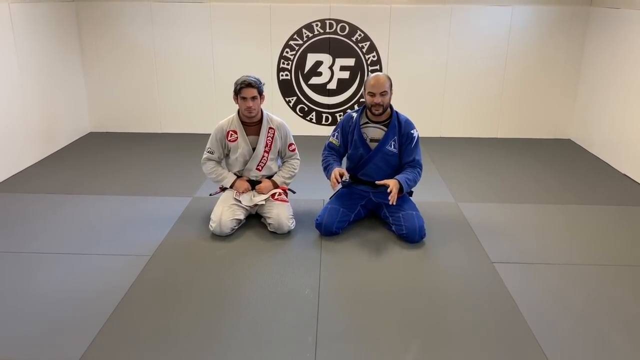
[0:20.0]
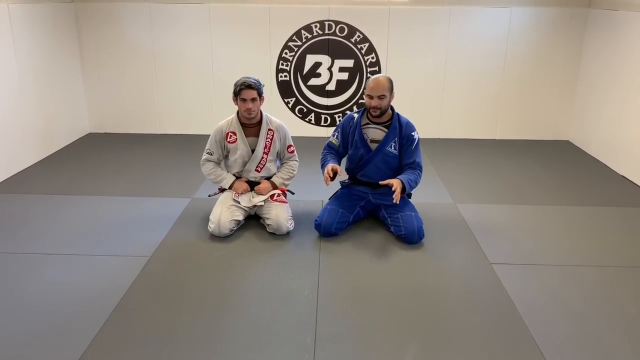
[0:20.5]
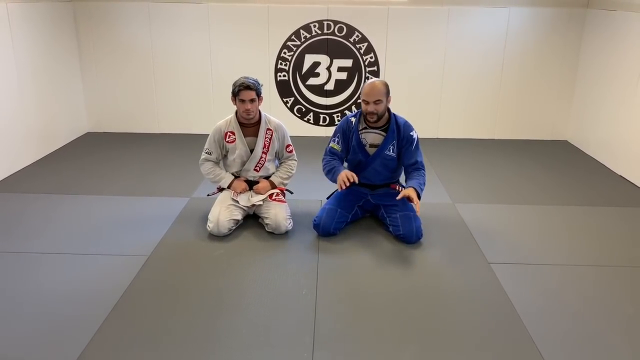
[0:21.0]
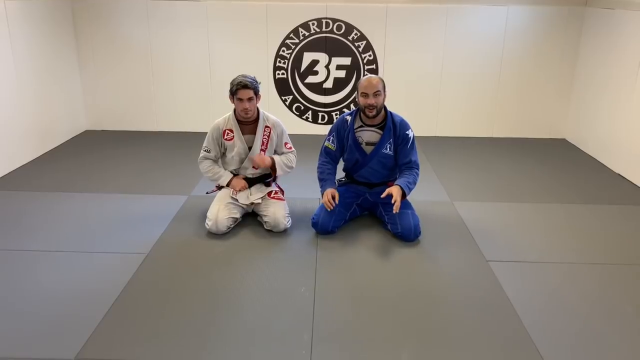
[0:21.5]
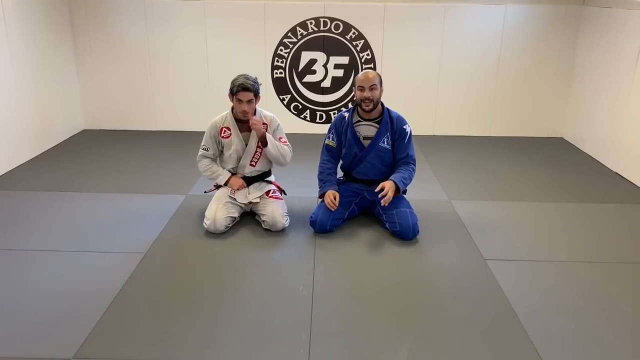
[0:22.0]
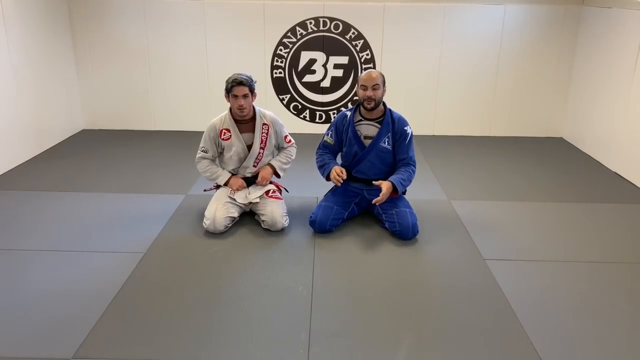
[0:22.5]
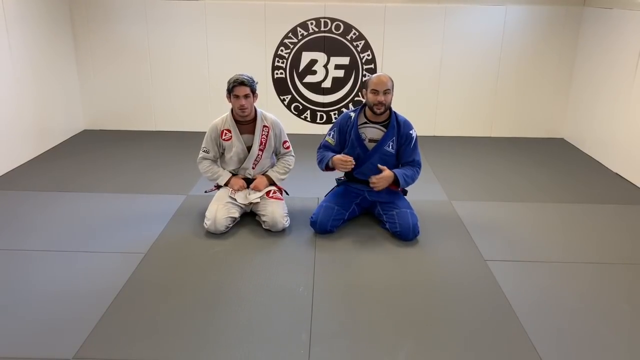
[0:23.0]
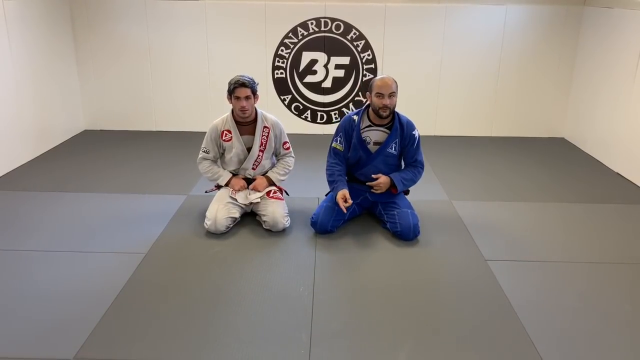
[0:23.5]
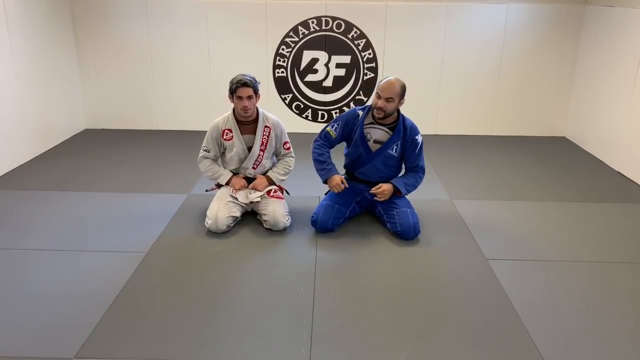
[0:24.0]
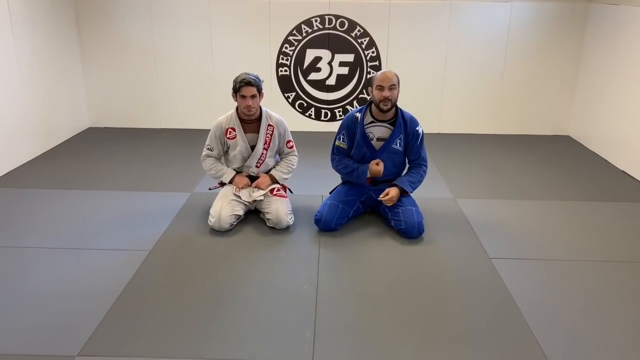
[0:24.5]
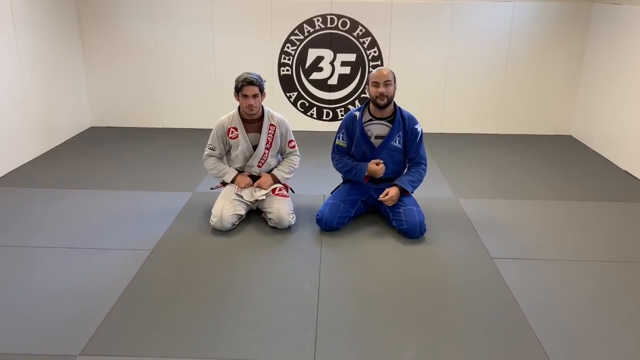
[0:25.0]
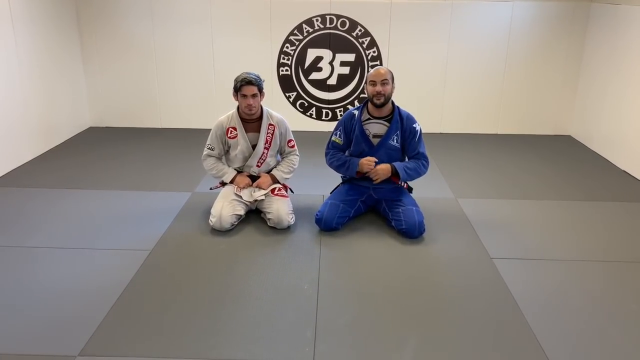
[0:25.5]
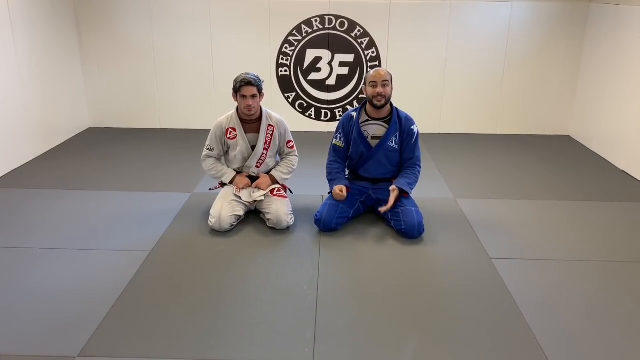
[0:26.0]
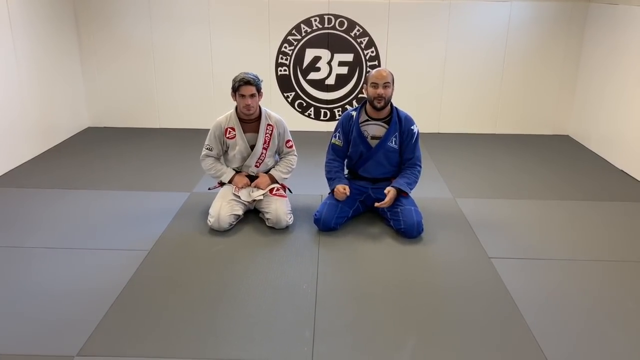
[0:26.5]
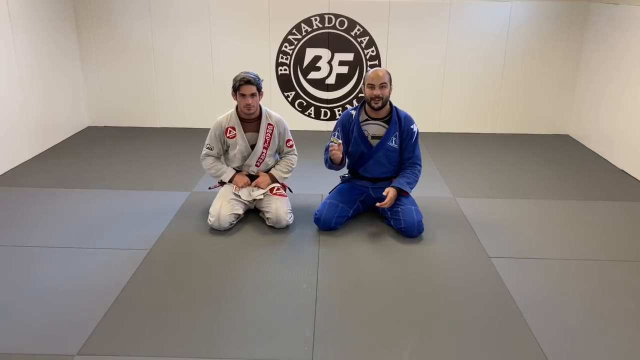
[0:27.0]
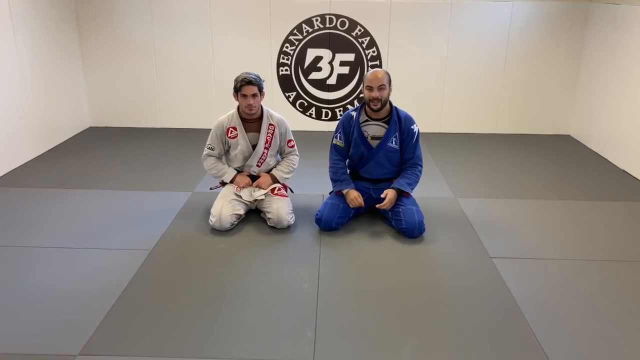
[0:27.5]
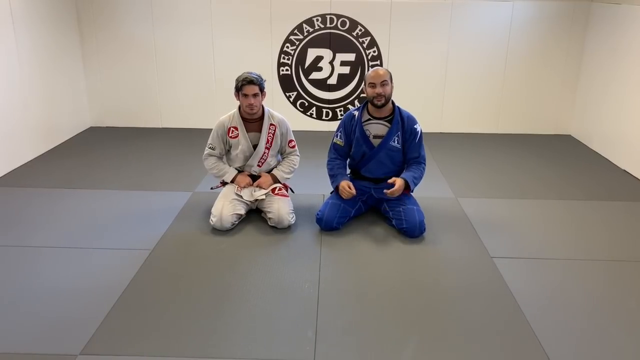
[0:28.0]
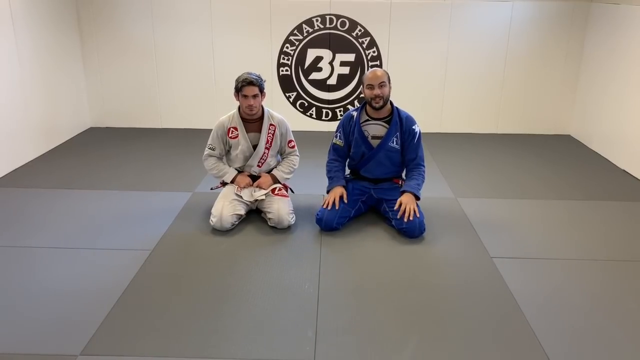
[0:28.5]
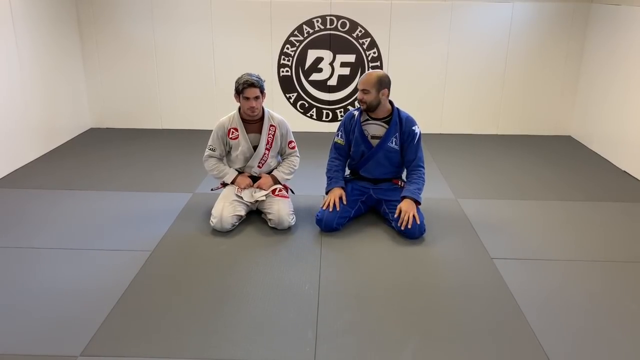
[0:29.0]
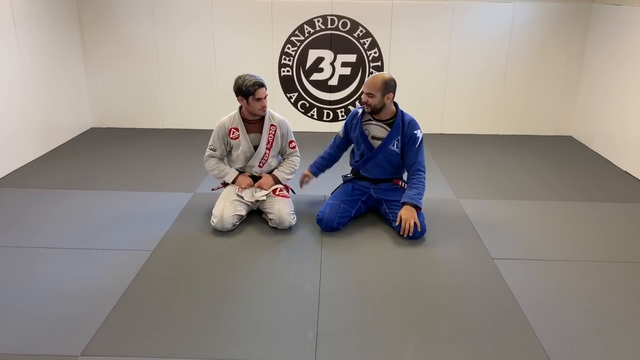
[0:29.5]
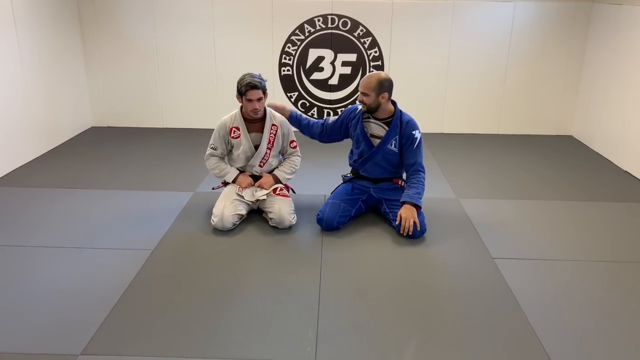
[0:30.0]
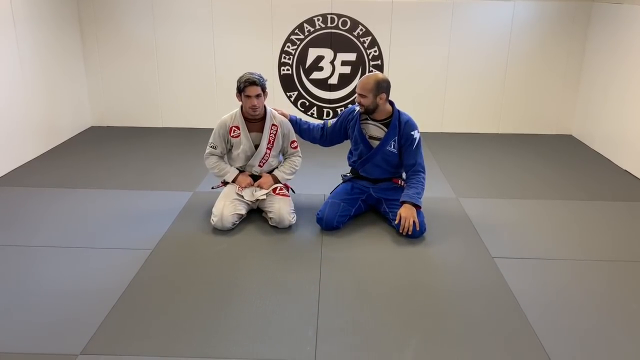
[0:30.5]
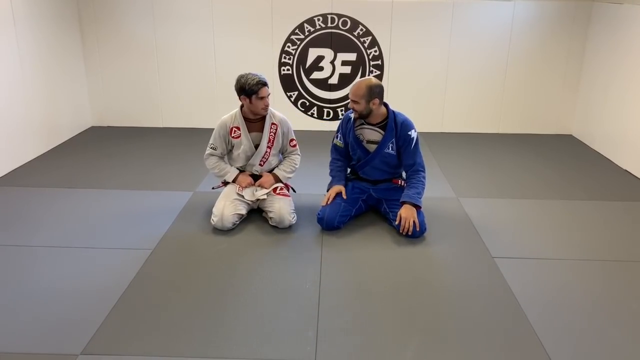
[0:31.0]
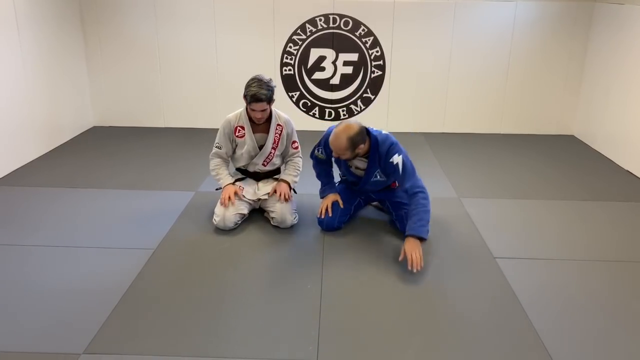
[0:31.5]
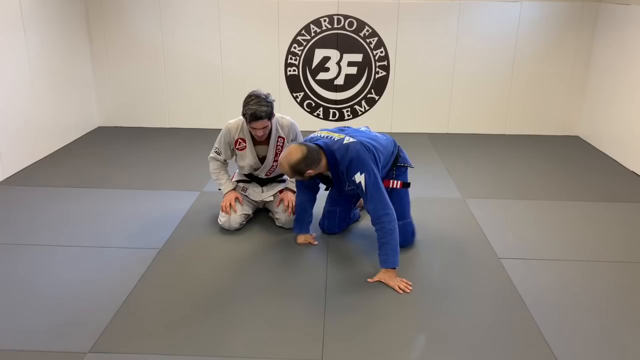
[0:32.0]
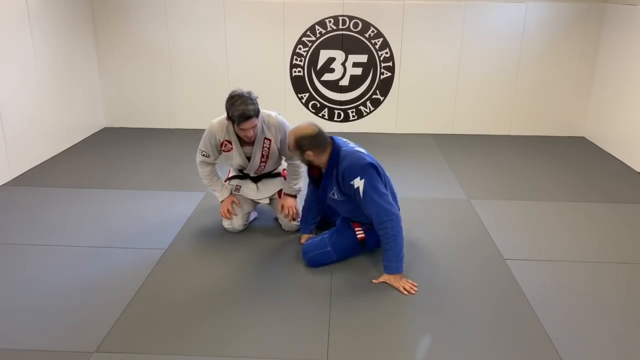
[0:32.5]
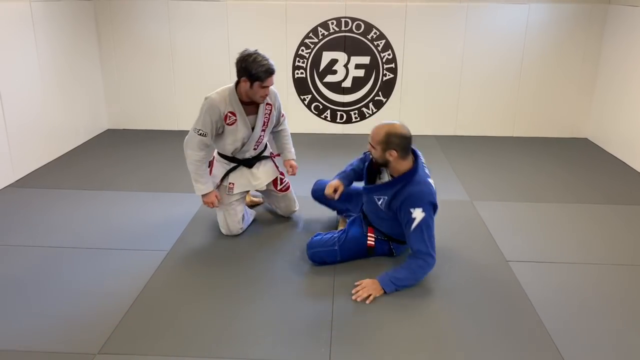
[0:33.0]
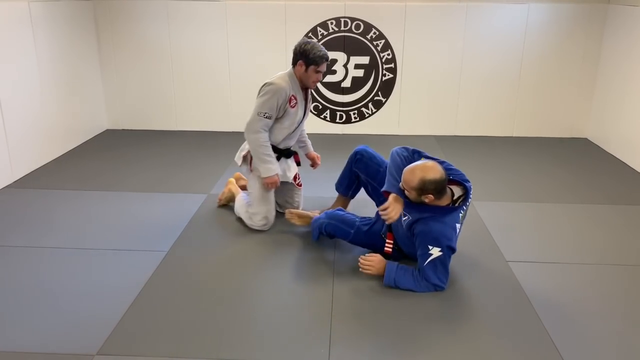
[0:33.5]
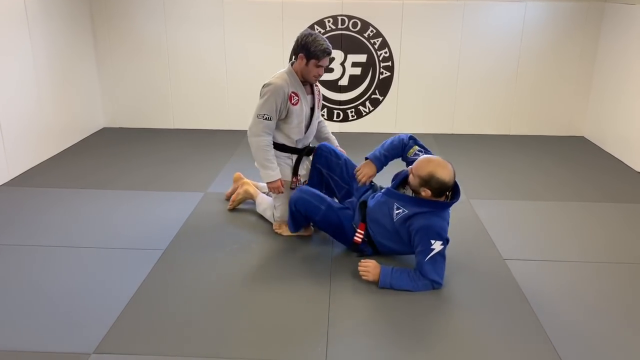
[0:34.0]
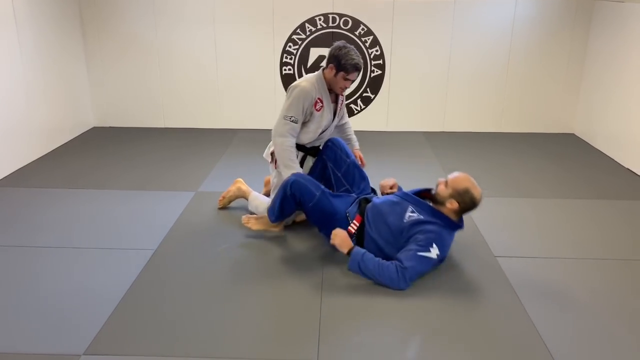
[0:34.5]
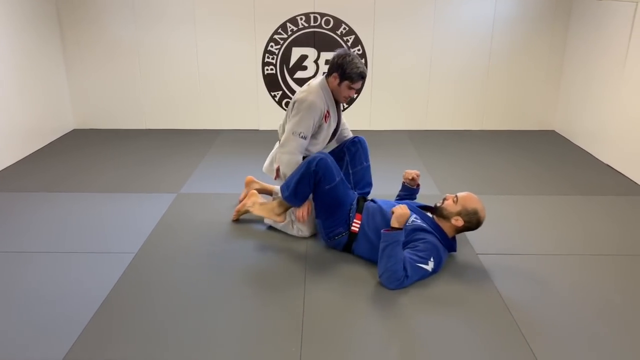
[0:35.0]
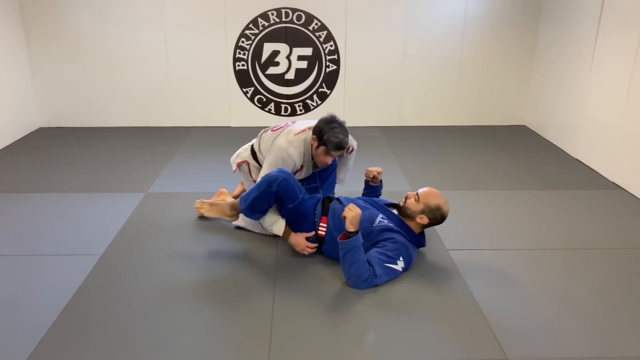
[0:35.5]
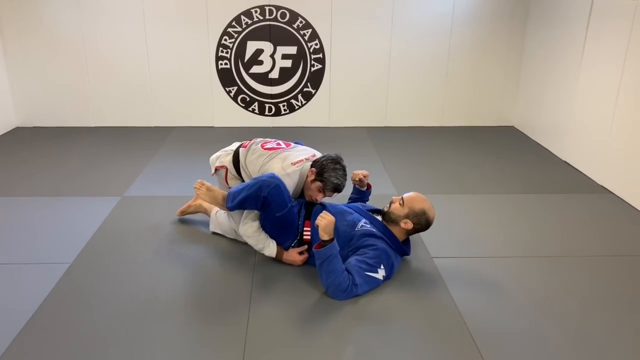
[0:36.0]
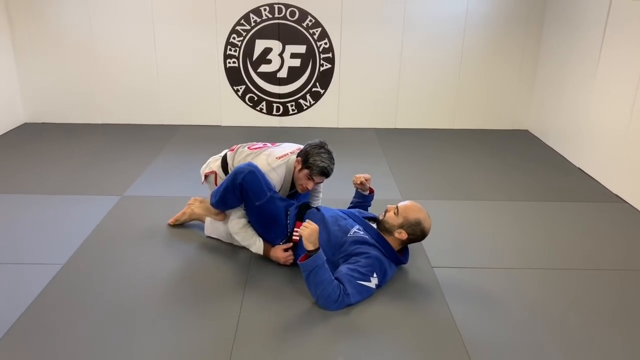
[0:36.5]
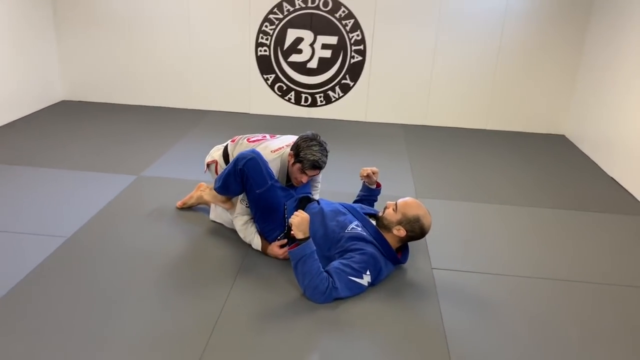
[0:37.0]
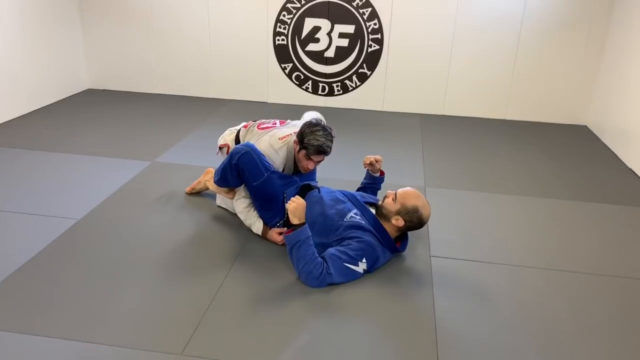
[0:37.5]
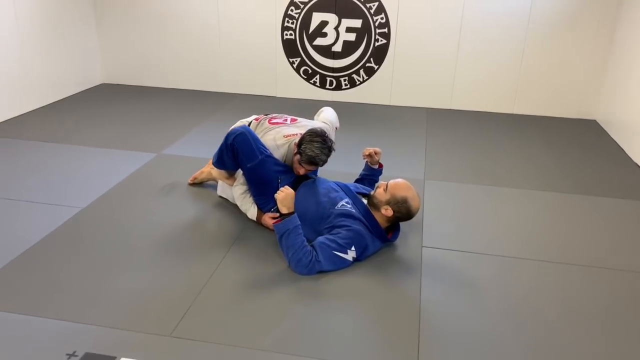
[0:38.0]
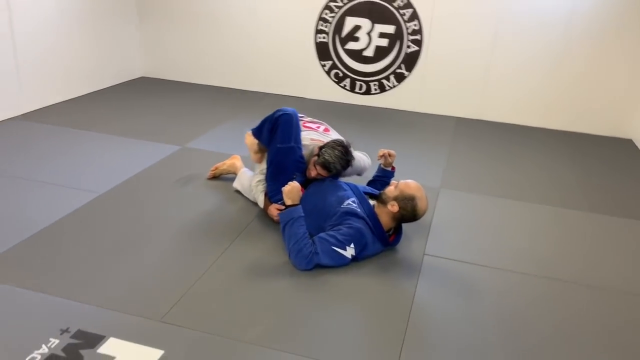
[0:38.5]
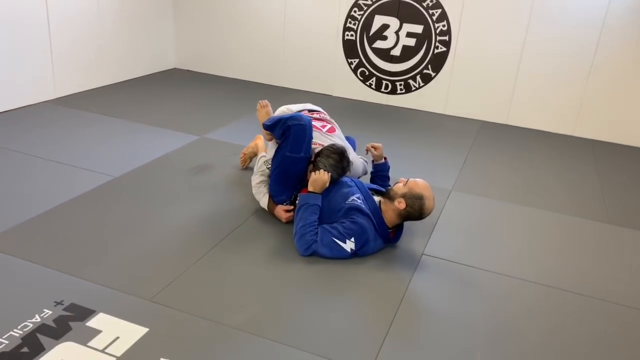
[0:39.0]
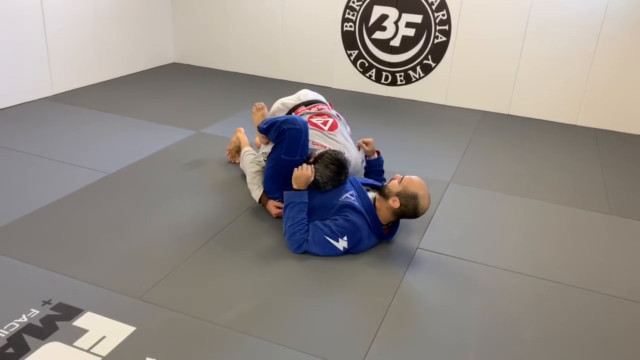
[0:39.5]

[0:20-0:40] The man in blue seems to be demonstrating something. He makes a swooshing motion with his right arm and makes a fist, like putting someone in a headlock. He opens his other hand and raises it up and down, as people do when they talk, expressing himself with his hands. The two then begin demonstrating fighting moves: the man in blue lies on his back and bends both legs up at an acute angle, and the other man puts his hand kind of under him, near his hip. They seem to be demonstrating a move that looks like UFC, but it stops before the move is shown.